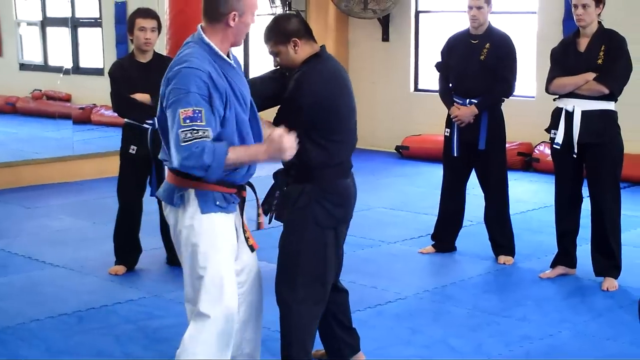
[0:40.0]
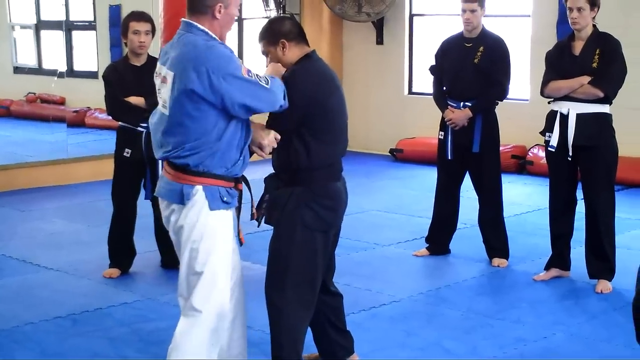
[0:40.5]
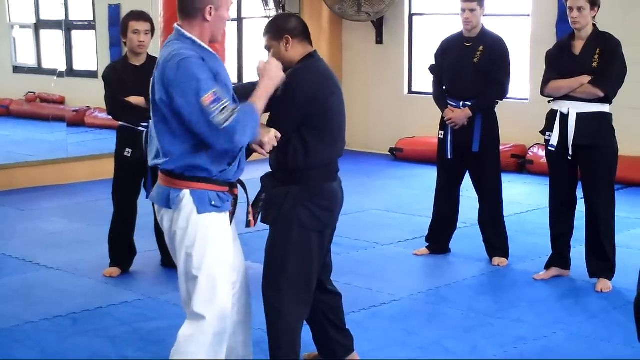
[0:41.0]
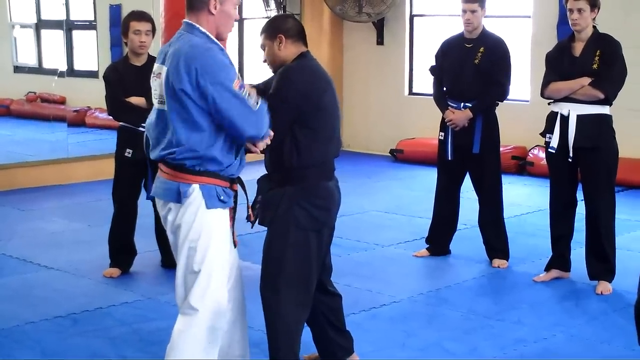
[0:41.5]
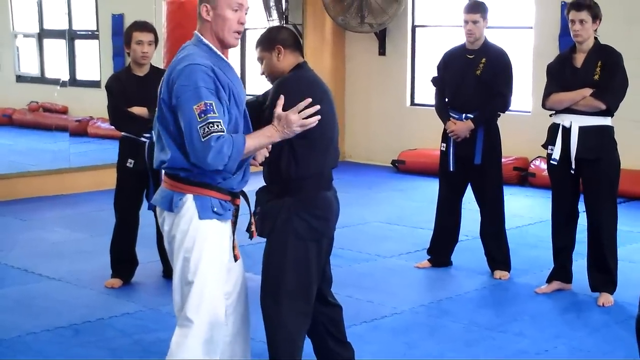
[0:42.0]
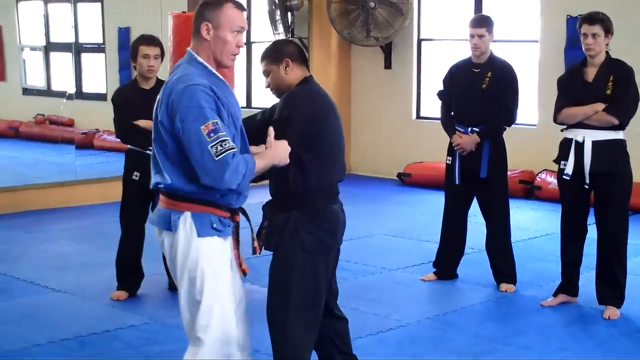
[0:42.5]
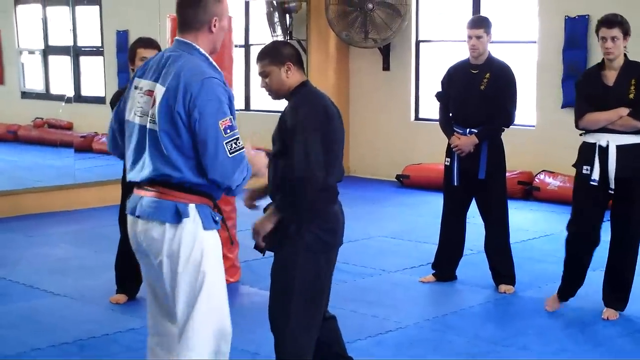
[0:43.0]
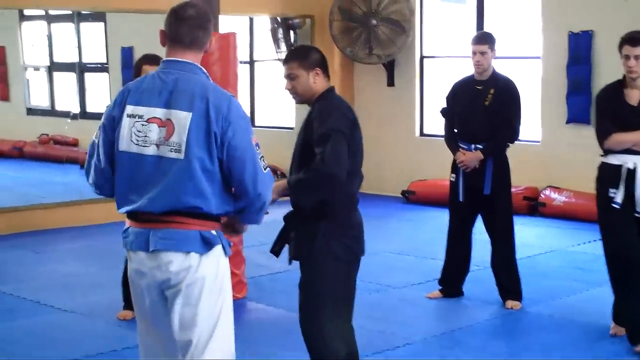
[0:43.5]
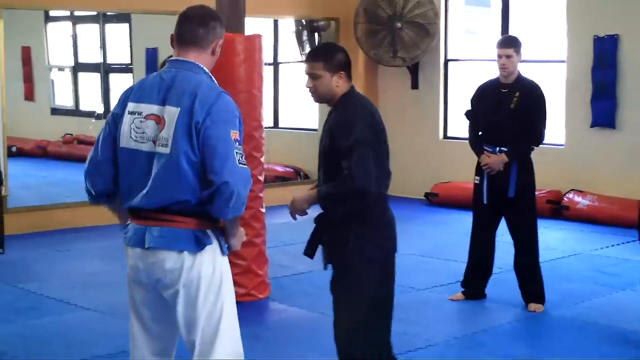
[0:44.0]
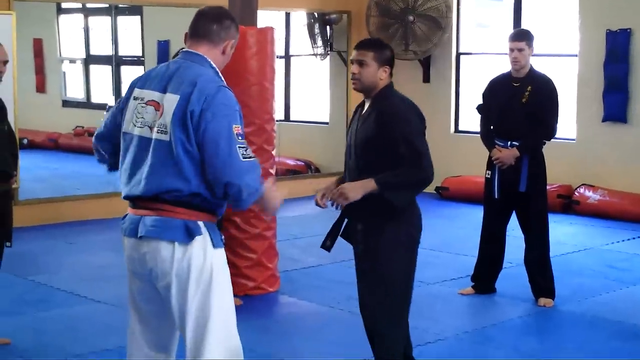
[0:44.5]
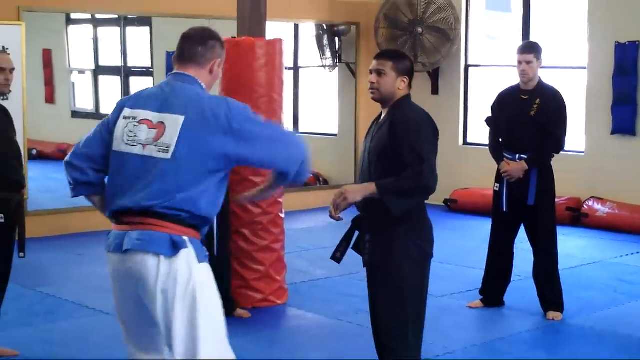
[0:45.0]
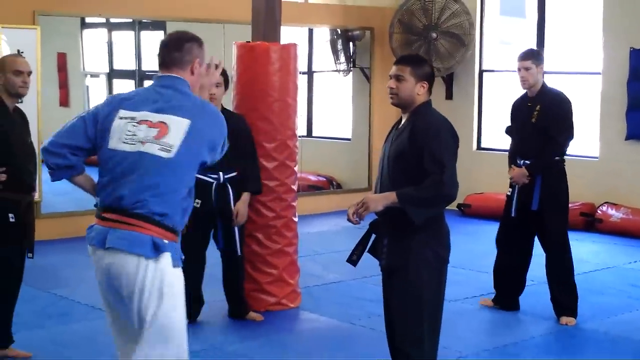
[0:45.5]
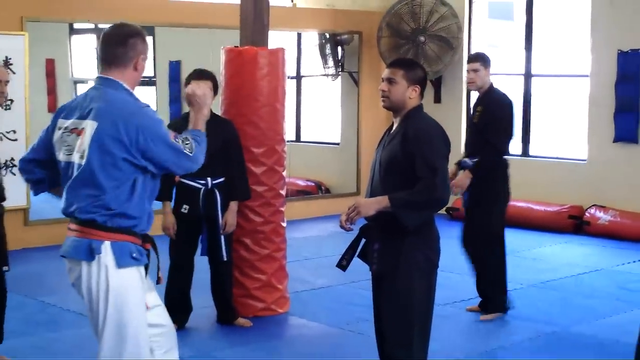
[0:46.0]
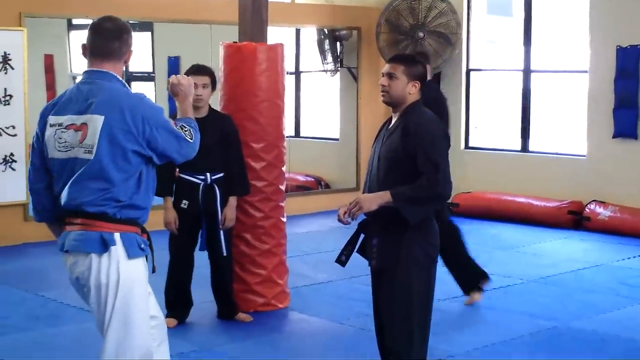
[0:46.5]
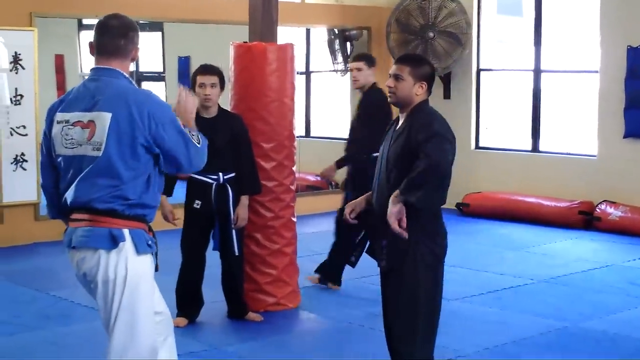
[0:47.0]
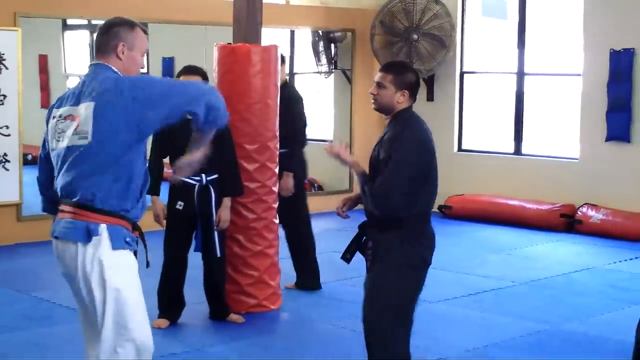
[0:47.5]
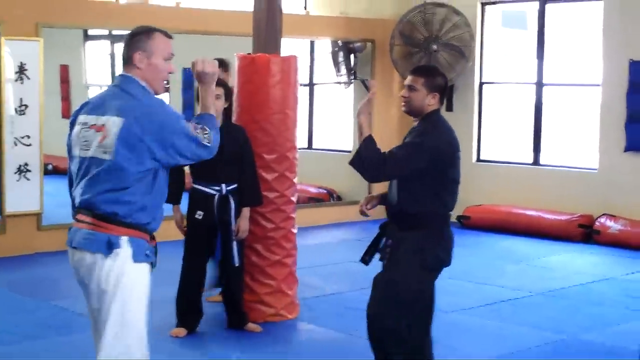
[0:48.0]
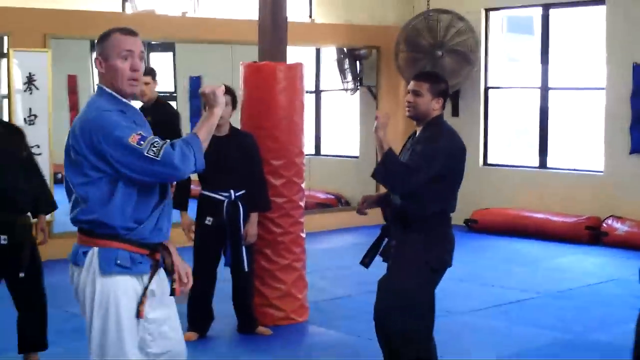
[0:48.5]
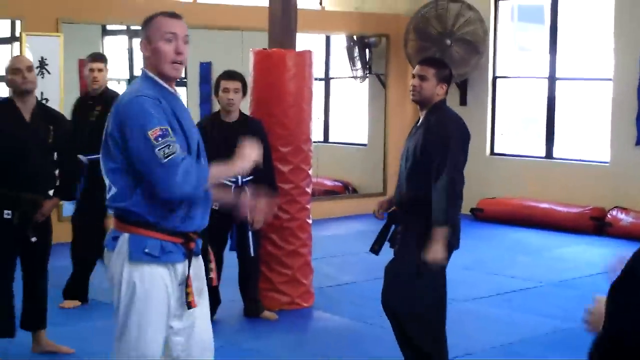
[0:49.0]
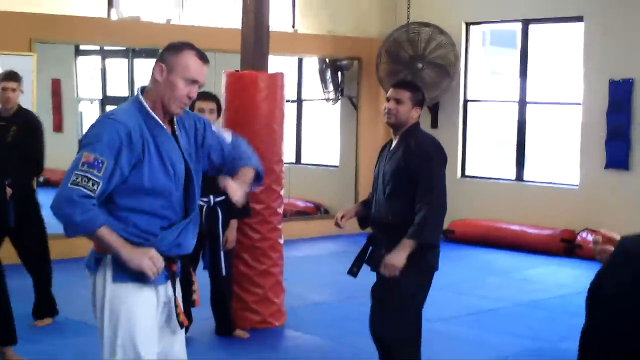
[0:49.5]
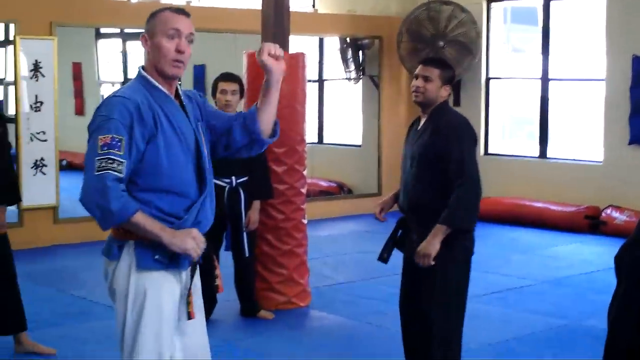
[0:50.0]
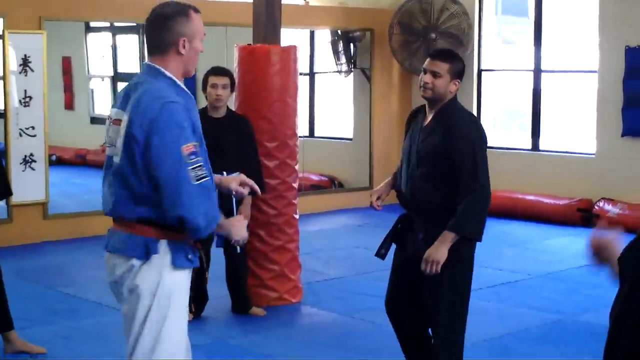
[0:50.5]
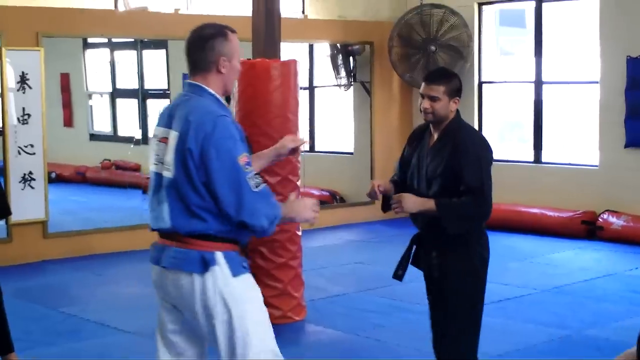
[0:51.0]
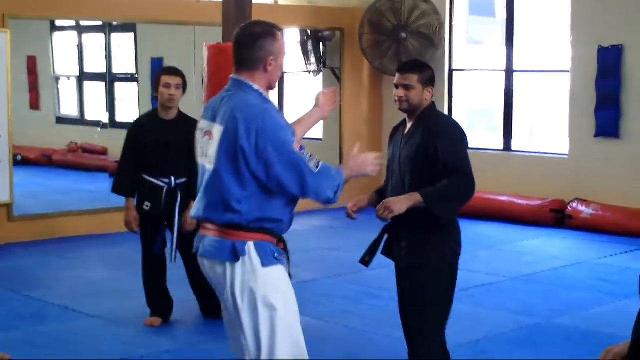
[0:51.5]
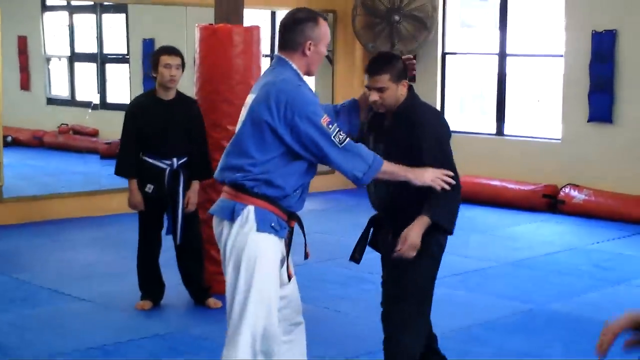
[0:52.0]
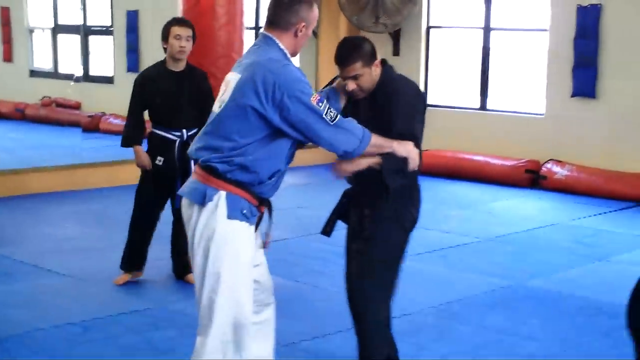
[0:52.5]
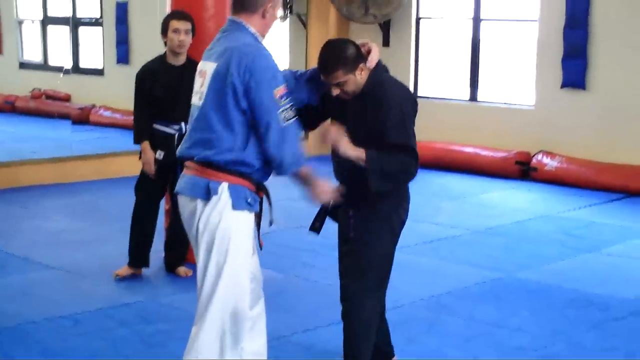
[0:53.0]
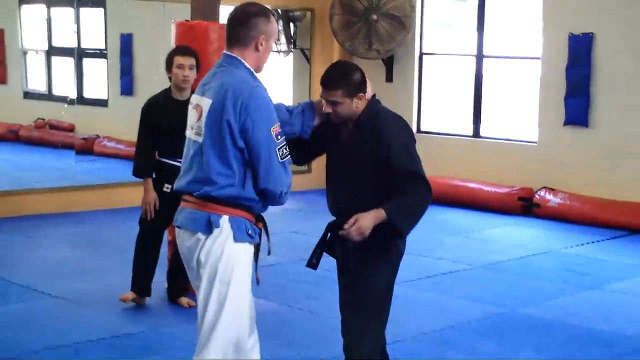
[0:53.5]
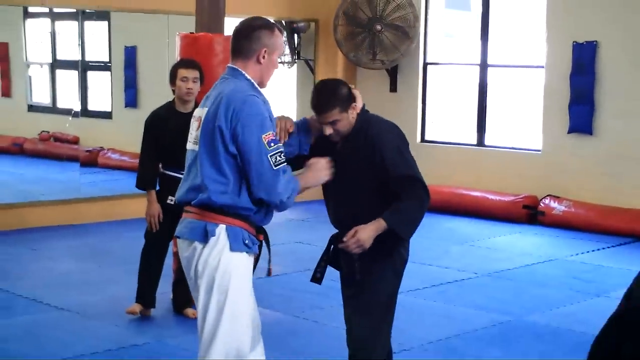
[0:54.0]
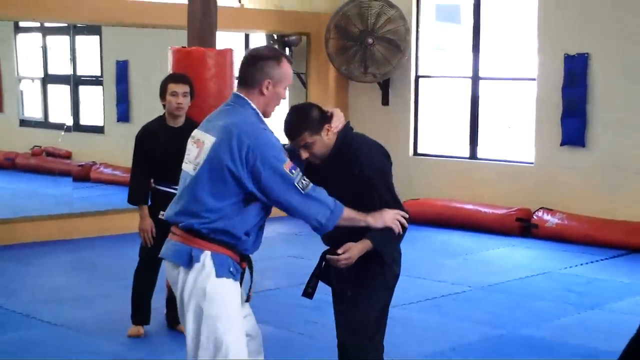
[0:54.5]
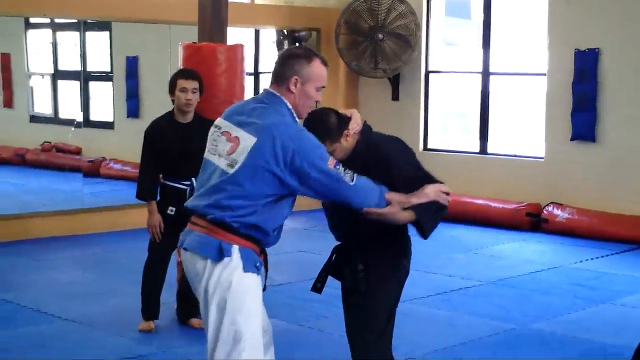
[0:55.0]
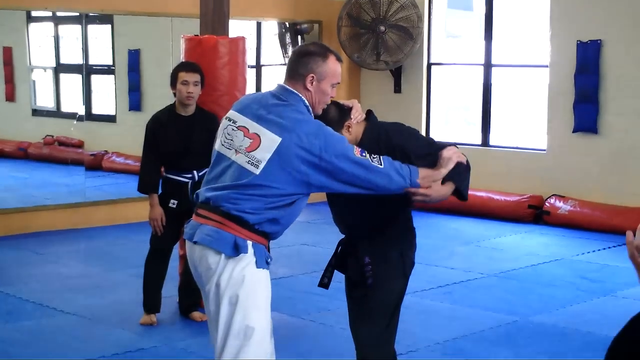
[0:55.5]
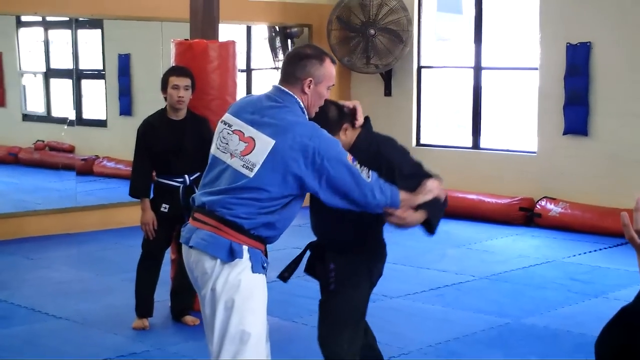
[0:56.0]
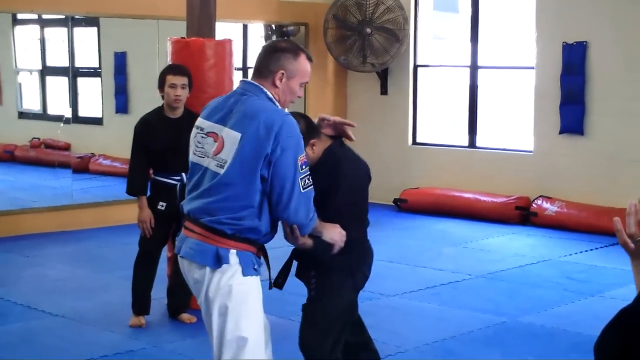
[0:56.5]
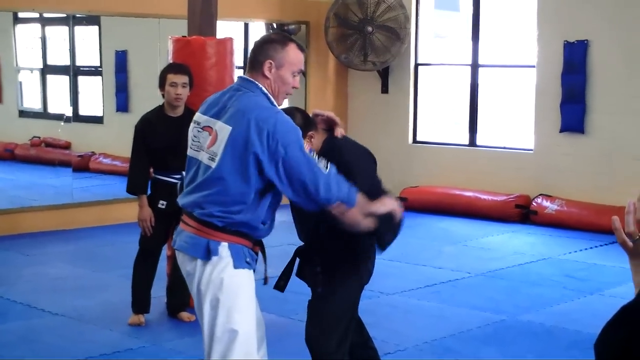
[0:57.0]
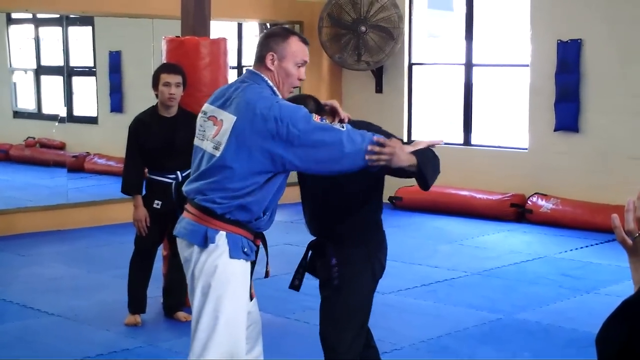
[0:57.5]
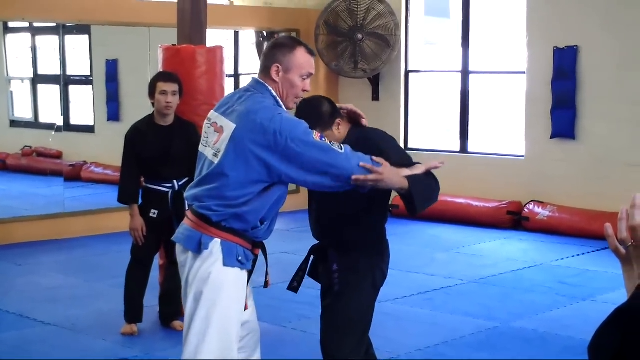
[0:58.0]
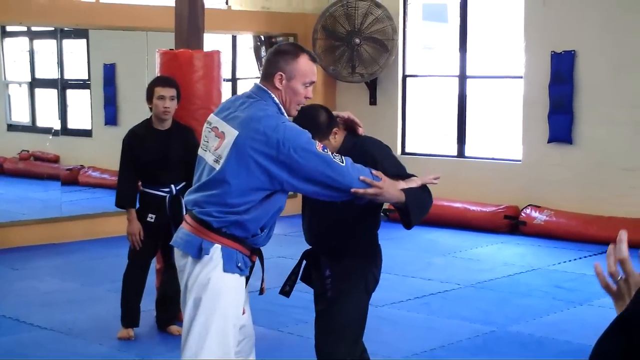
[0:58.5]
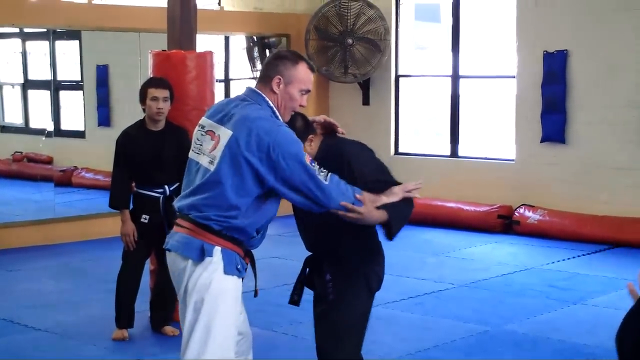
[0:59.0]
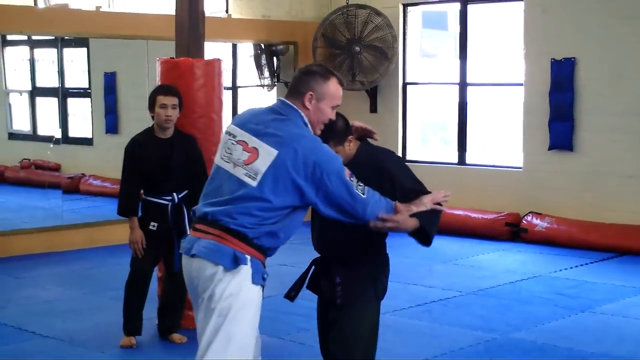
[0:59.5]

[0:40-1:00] A martial arts instructor teaches a class, demonstrating a move on a student. He looks up at the other students and shows them with his arm what he is going to do. He clasps the student's head and pushes out his arm while many of the other students gather around. The students are dressed in black with various colored belts around their waists. The gym is mirrored and has a blue cushioned floor. A very large black fan is in the corner, red bumpers surround the column in the middle of the room, and bumpers lie on the floor underneath the window. The instructor wears a blue coat, several colored belts around his waist, and white pants. The other students watch and move around the floor to get a better look at the move. The instructor is much taller than the students and appears to be possibly American.